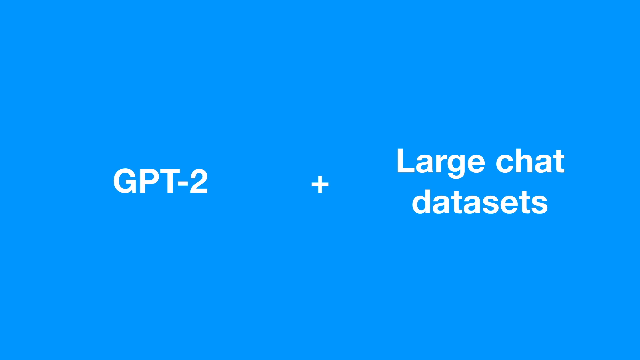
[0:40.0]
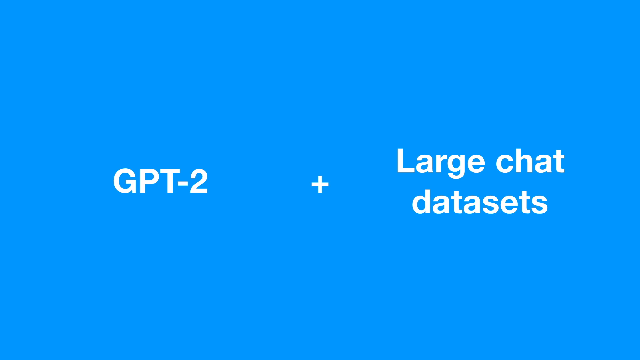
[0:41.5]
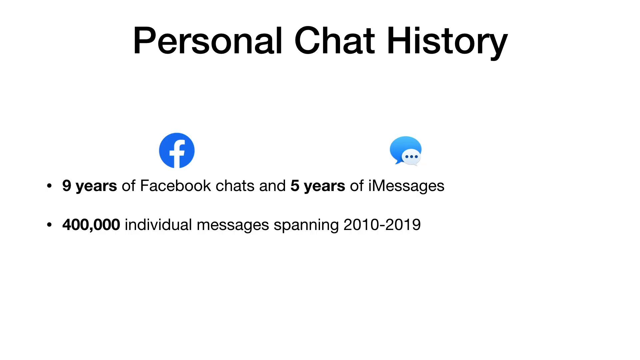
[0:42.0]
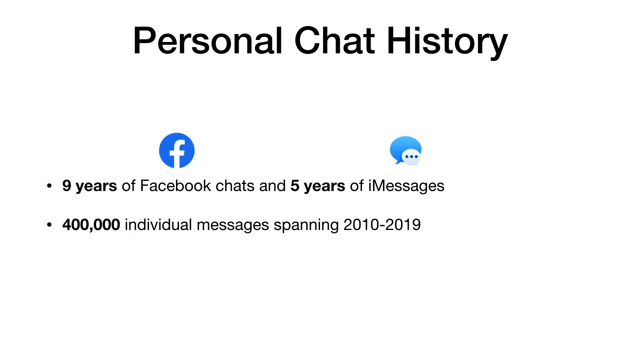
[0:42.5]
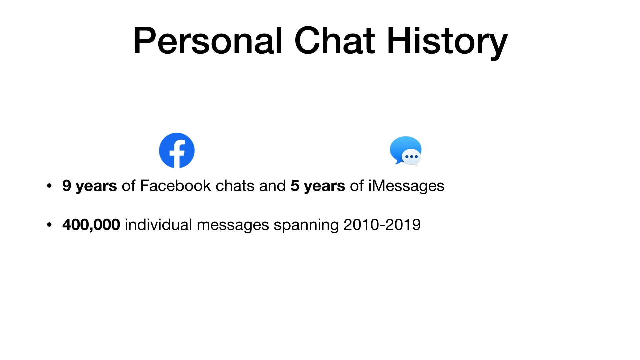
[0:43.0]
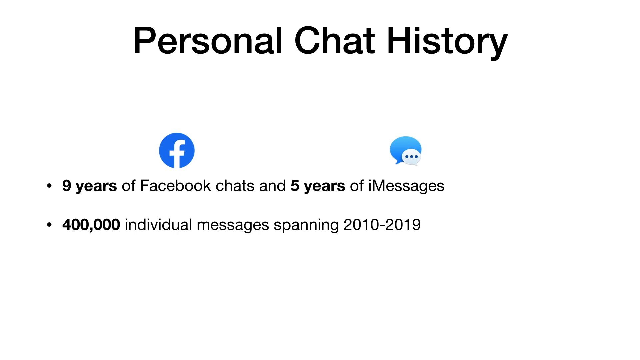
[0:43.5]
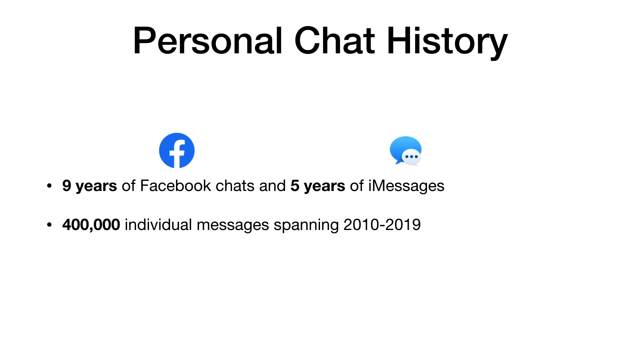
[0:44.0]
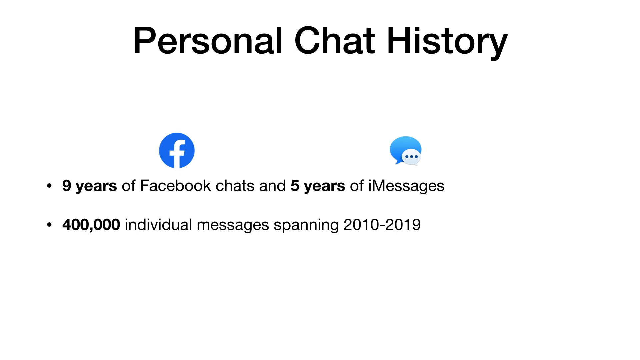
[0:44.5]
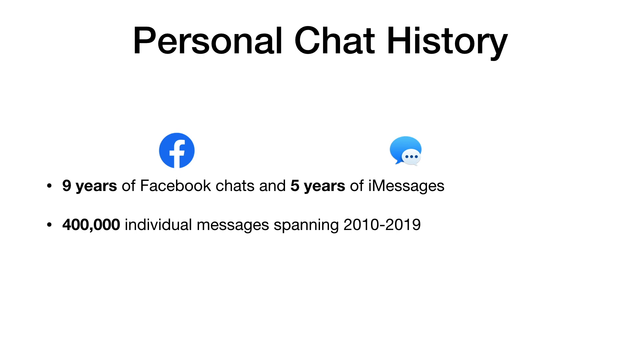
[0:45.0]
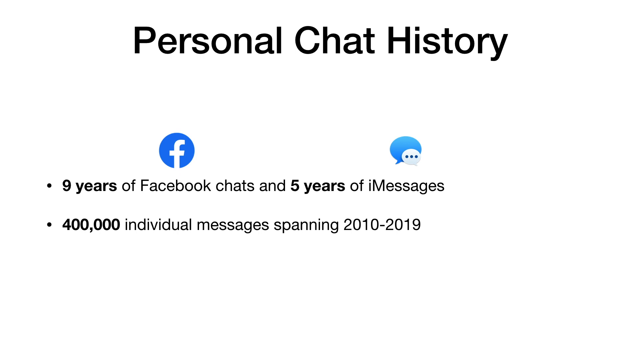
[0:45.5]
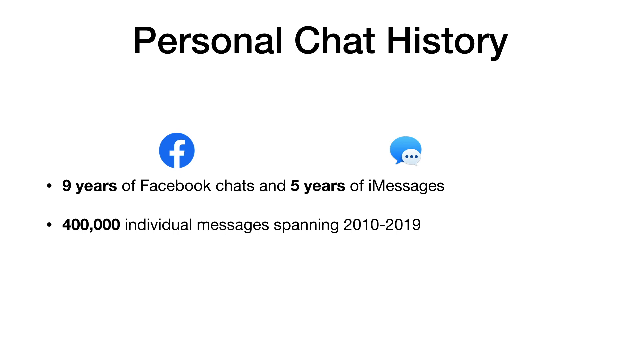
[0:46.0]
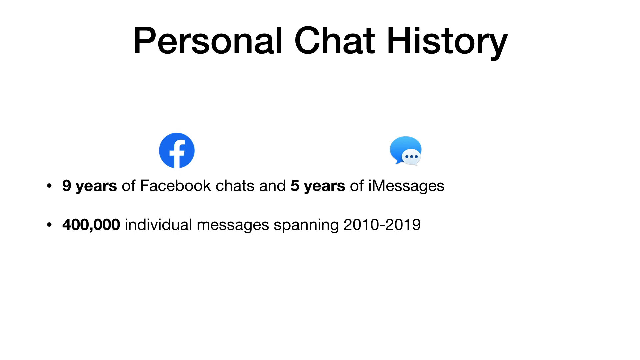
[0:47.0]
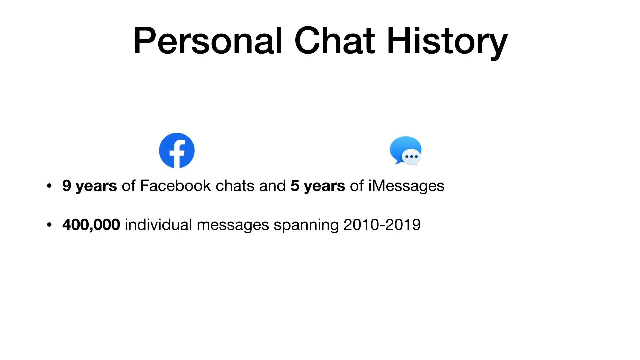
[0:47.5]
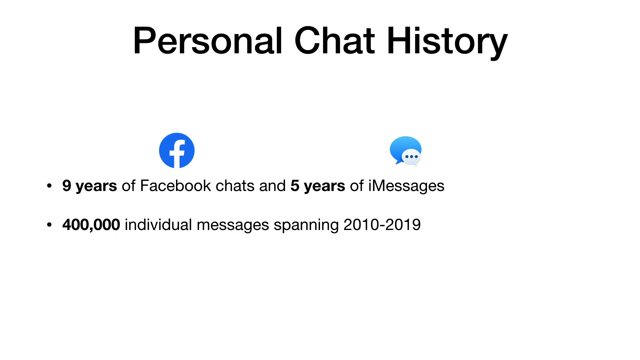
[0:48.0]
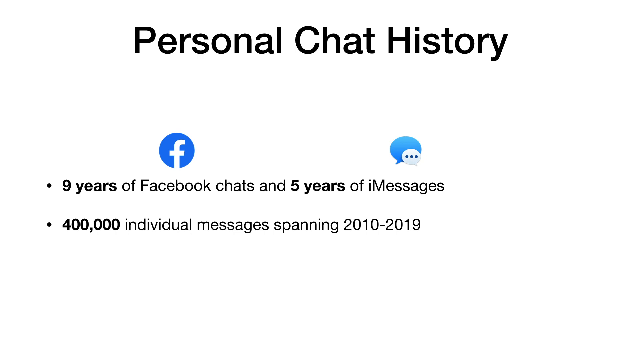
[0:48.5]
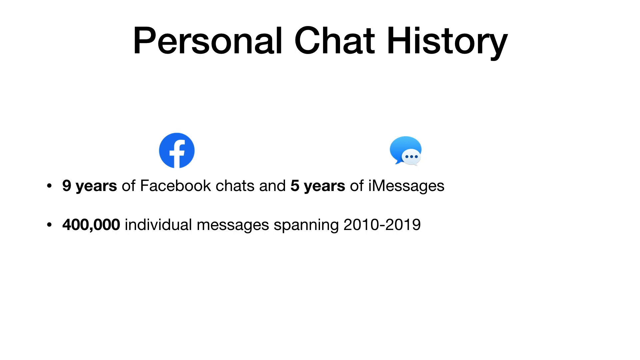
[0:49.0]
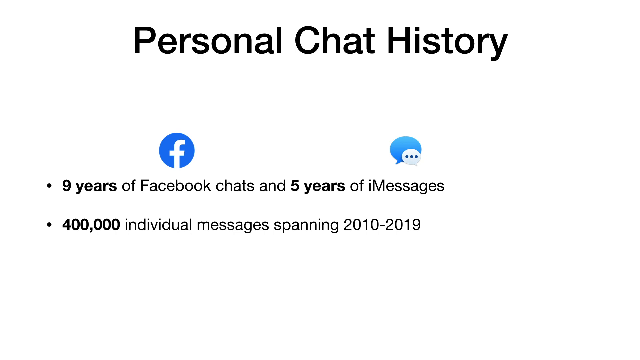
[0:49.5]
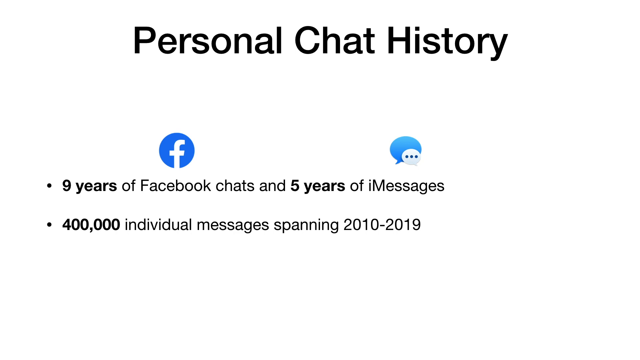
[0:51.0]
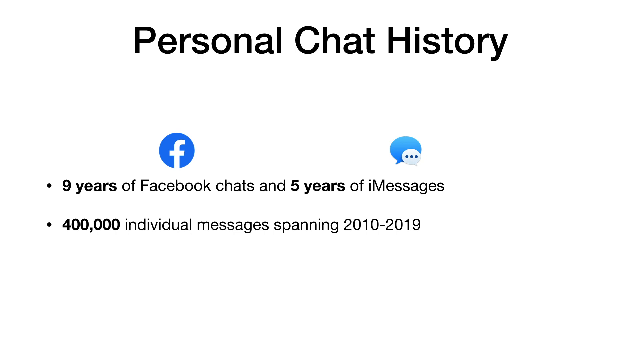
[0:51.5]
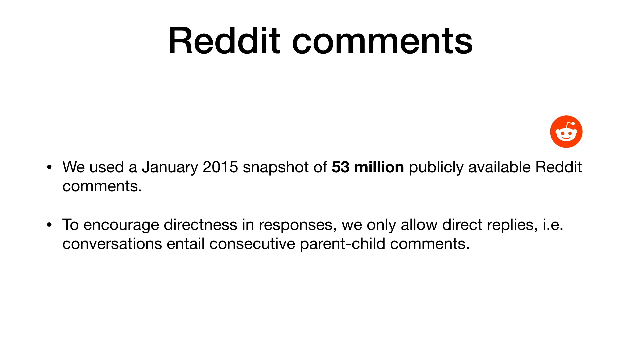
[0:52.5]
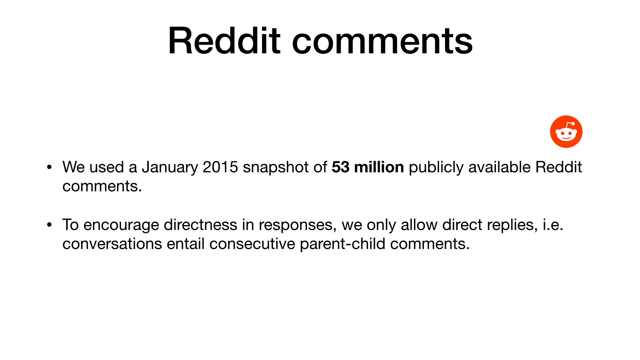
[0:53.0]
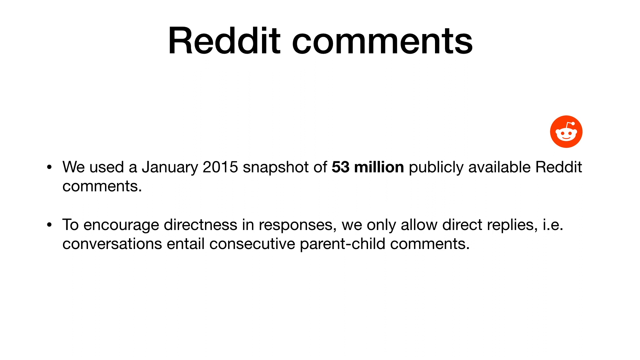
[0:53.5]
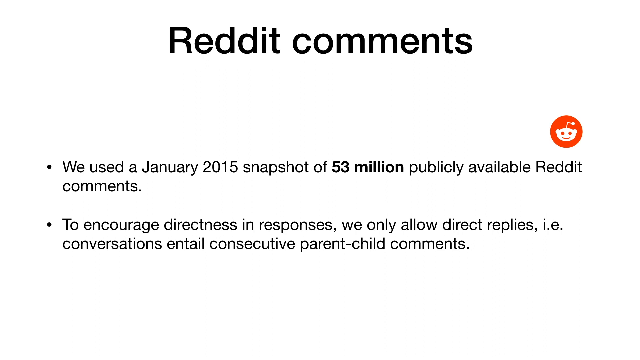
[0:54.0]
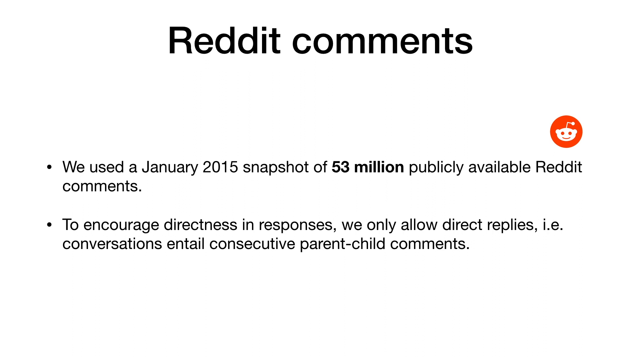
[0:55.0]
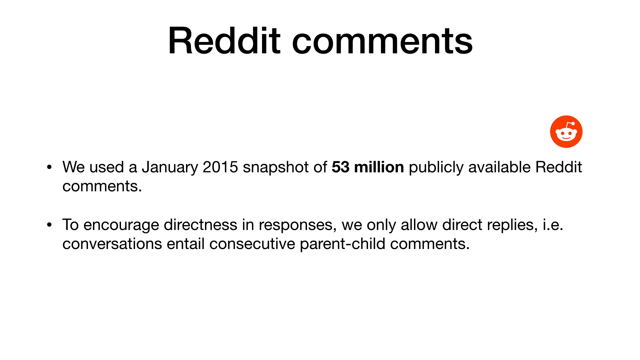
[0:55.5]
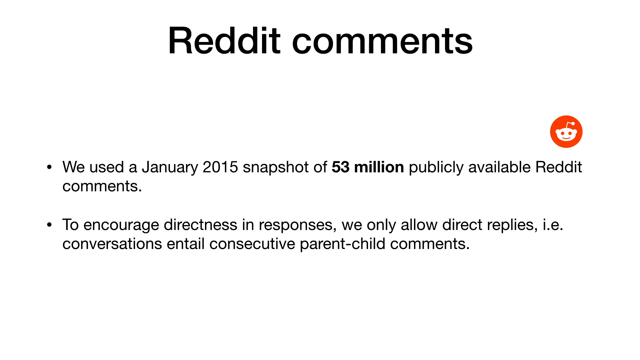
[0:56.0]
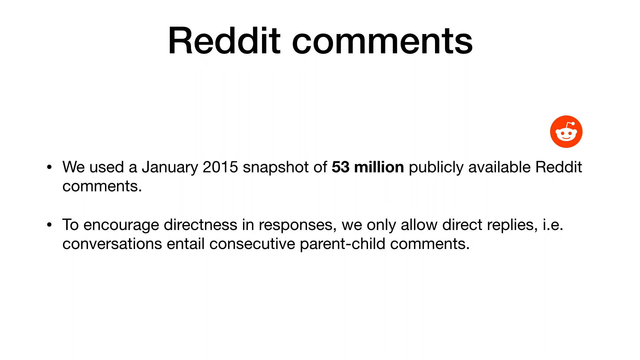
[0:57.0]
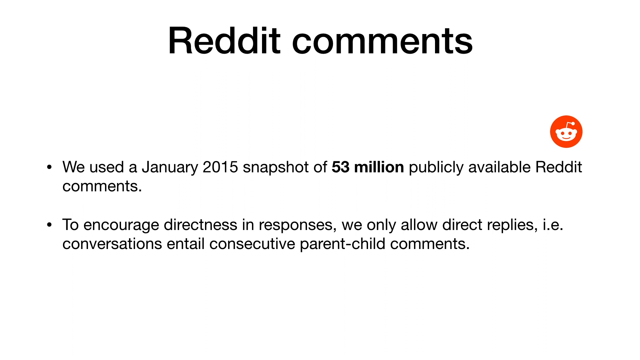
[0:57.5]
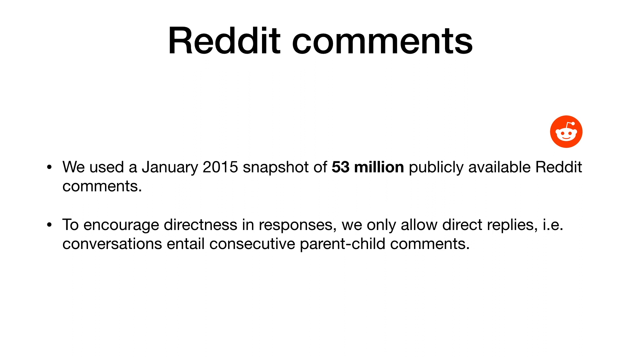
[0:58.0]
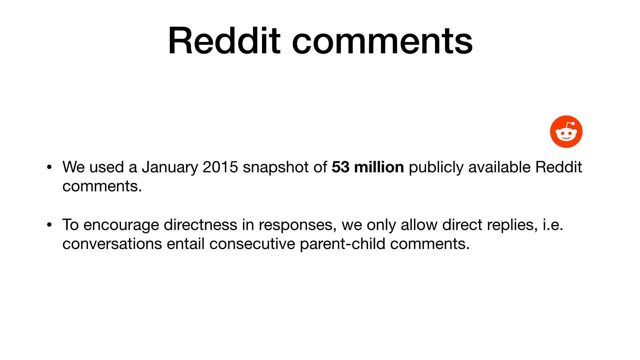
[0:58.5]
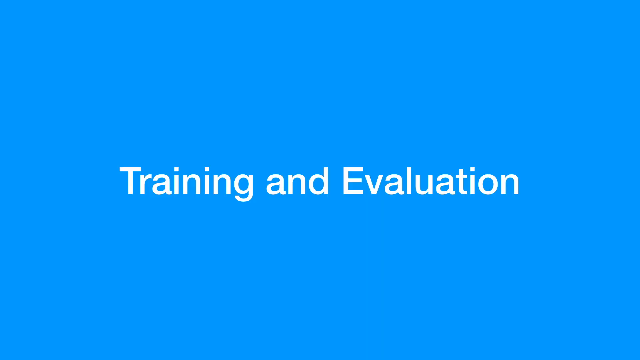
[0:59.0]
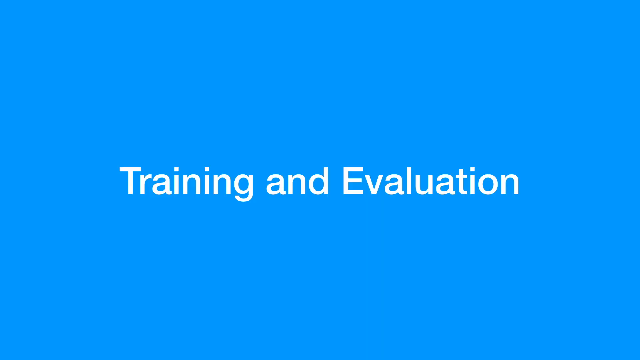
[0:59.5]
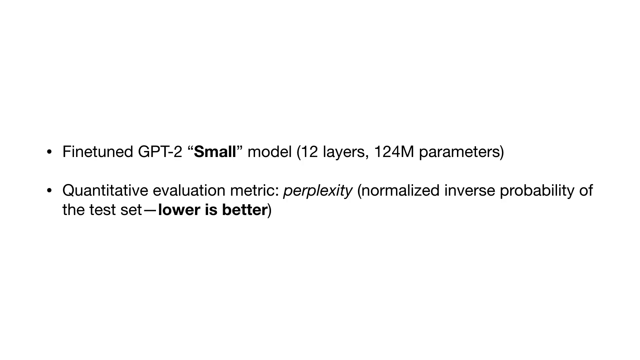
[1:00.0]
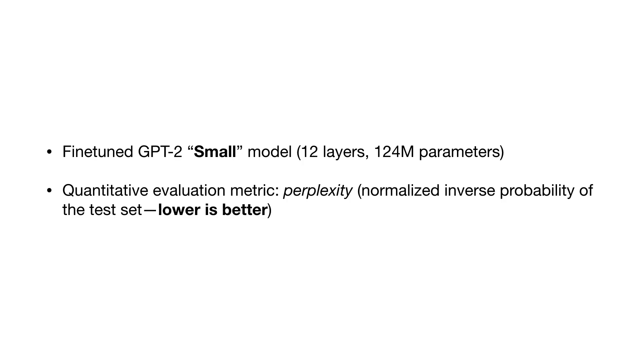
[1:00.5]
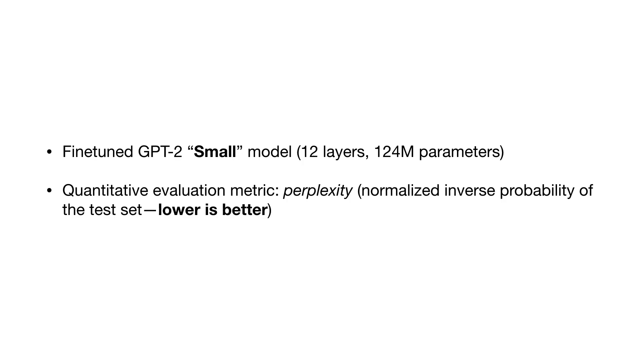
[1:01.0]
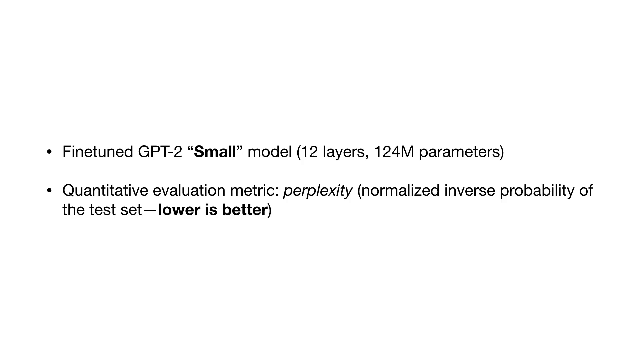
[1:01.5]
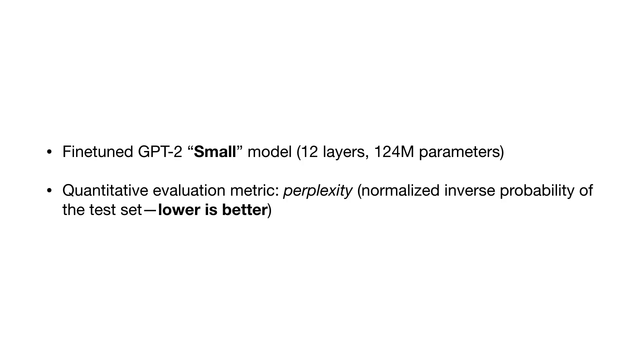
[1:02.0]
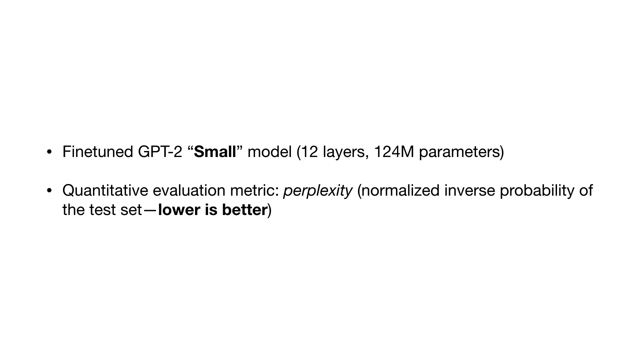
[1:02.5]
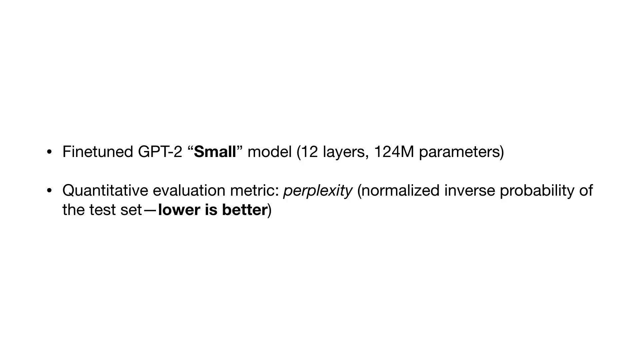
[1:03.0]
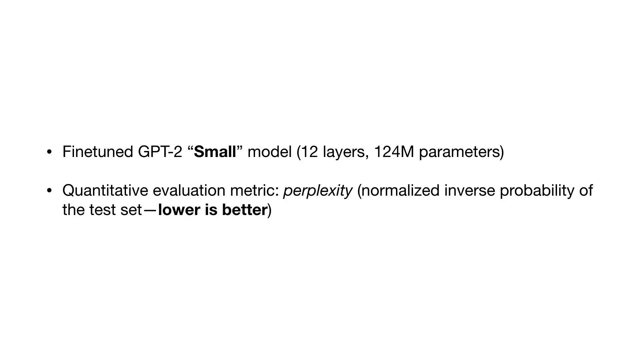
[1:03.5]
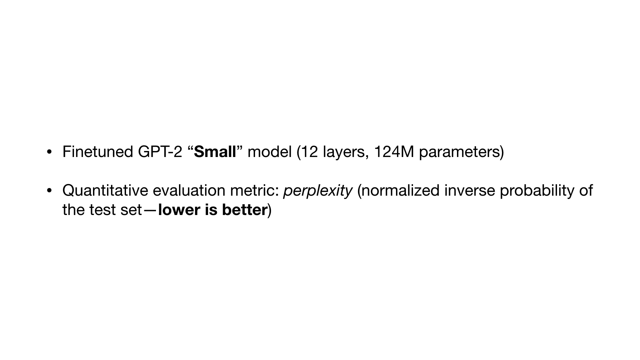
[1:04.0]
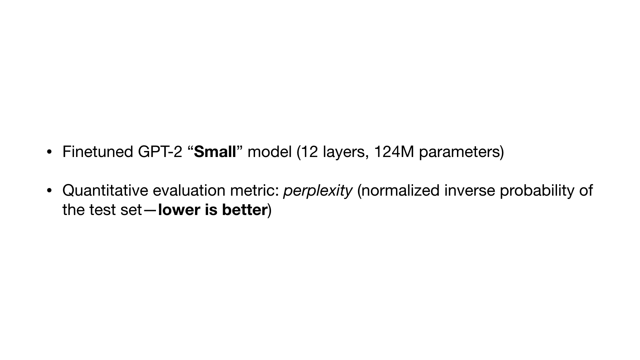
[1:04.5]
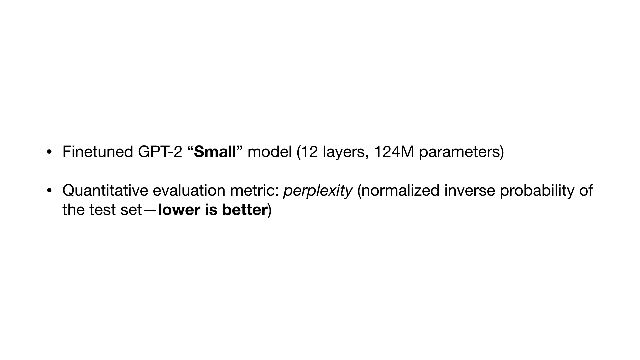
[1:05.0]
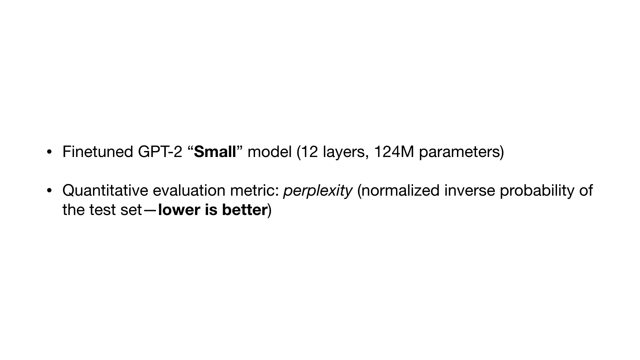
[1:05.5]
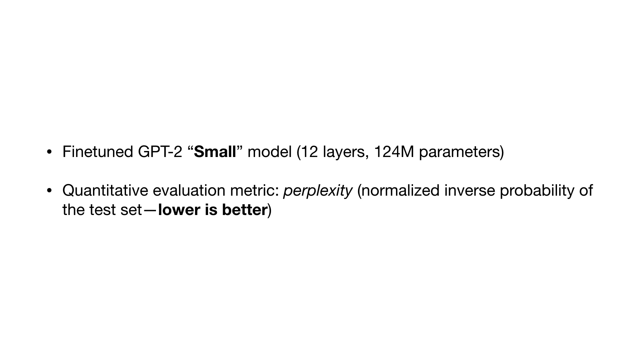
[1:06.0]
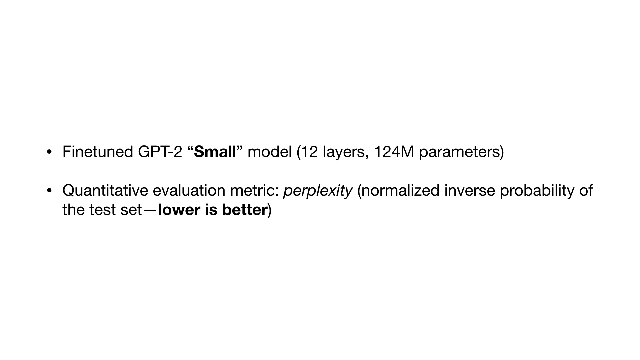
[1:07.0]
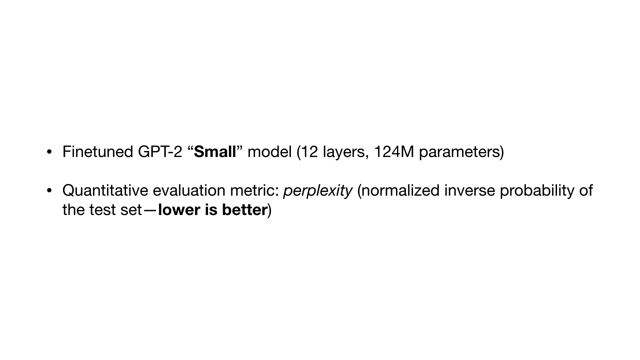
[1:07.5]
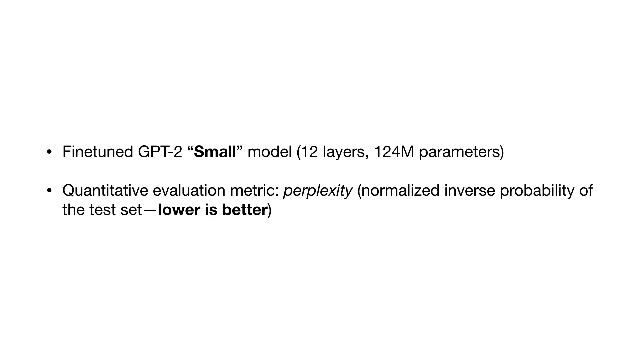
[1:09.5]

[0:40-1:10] The blue slide about GPT-2 and large chat data sets is on screen, then the video cuts to a plain white slide with black text reading "personal chat history nine years of facebook chats and five years of i messages 400 000 individual messages spanning from 2010 to 2019." A small Facebook symbol is above the word Facebook and an iMessages icon is above the word iMessages. The next slide is also white with black text and reads "reddit comments" and "we use a january 2015 snapshot of 53 million publicly available reddit comments to encourage directness in response we only allow direct replies," with a small Reddit icon above the word Reddit. This slide stays up for maybe about five to six seconds before a blue slide reading "training and evaluation" appears.